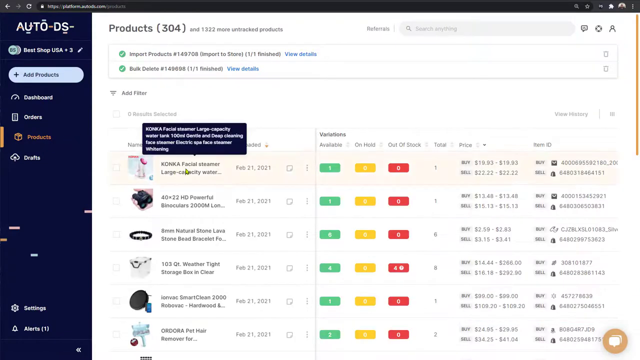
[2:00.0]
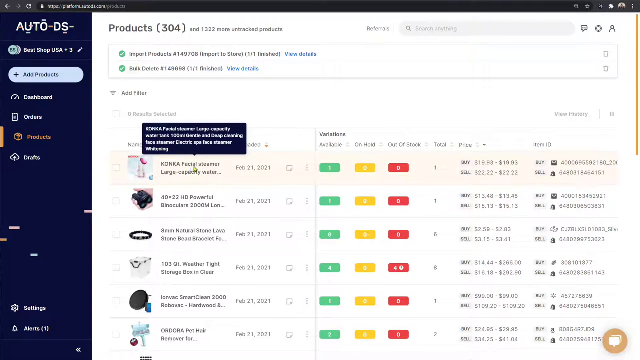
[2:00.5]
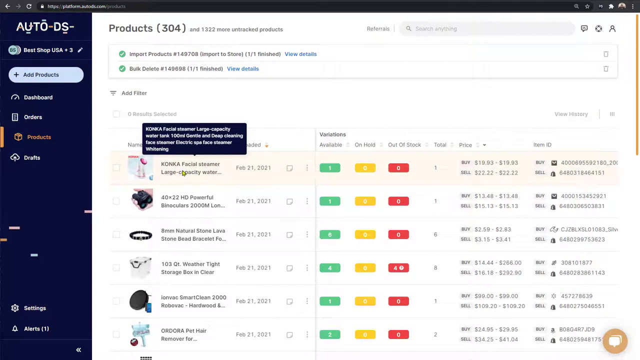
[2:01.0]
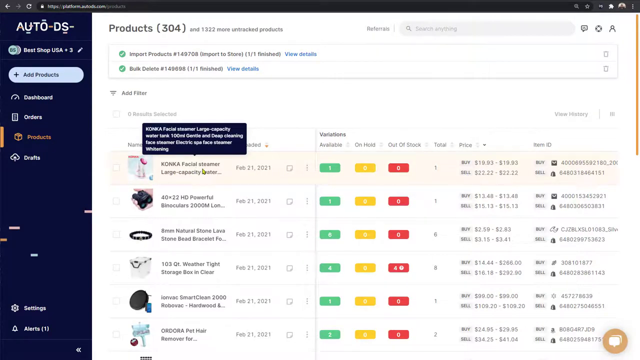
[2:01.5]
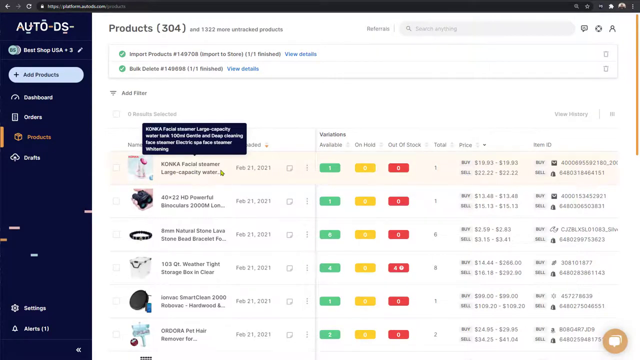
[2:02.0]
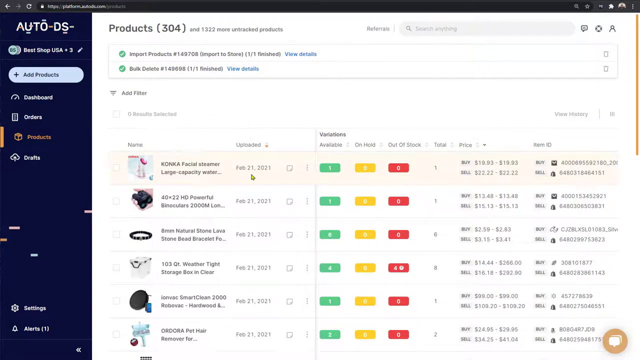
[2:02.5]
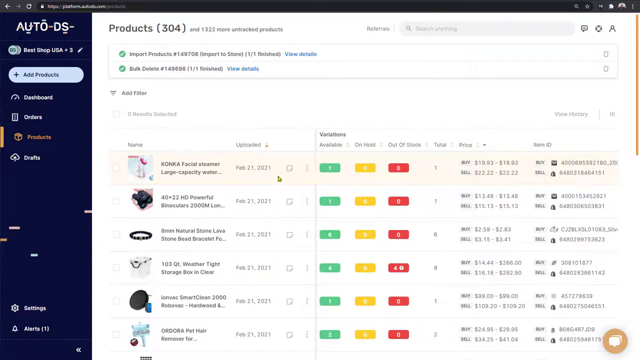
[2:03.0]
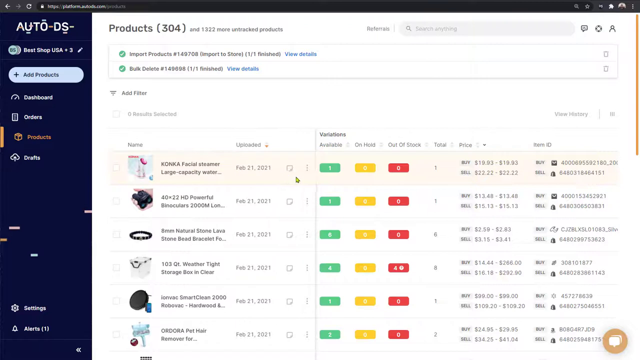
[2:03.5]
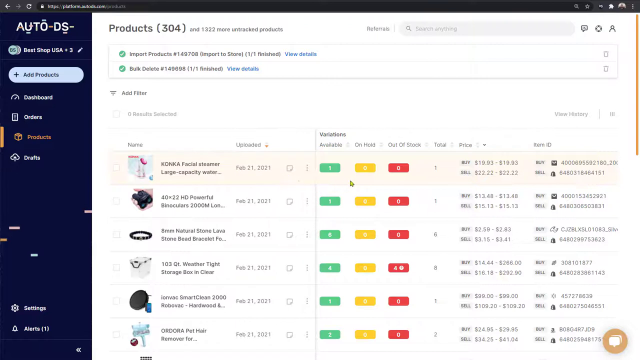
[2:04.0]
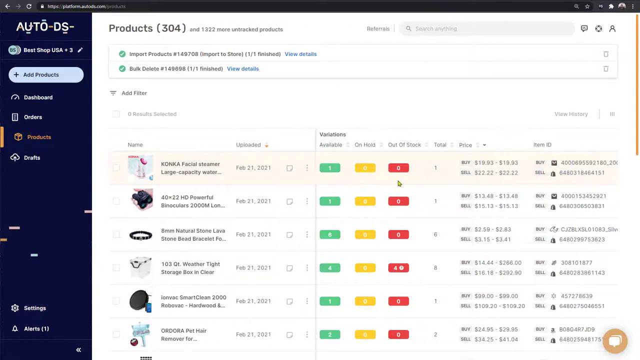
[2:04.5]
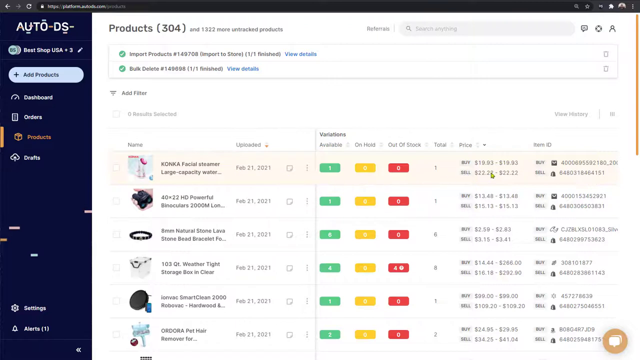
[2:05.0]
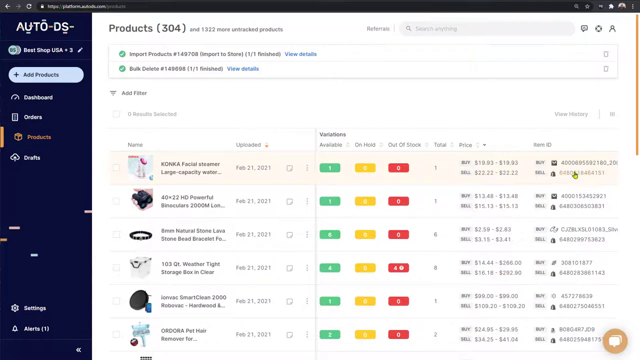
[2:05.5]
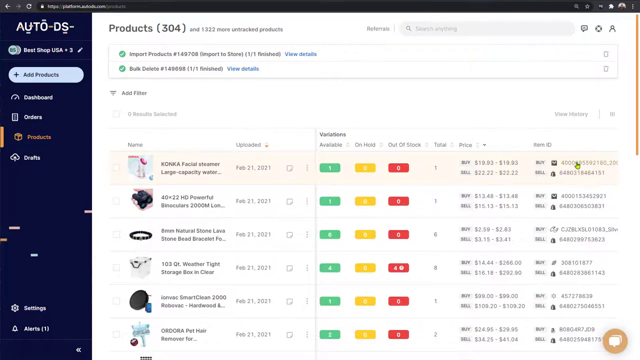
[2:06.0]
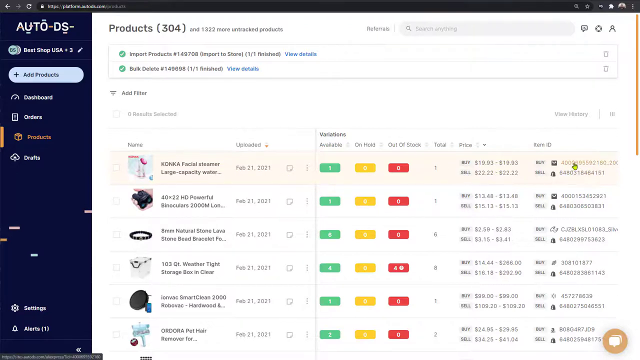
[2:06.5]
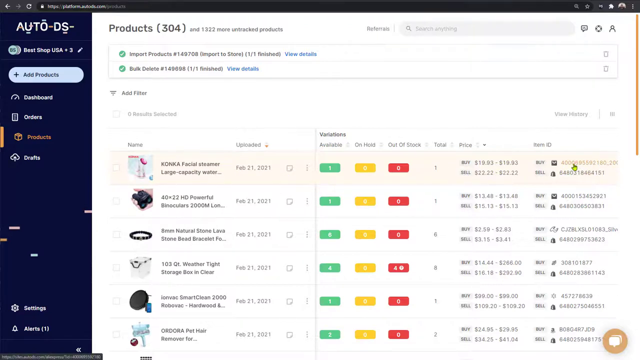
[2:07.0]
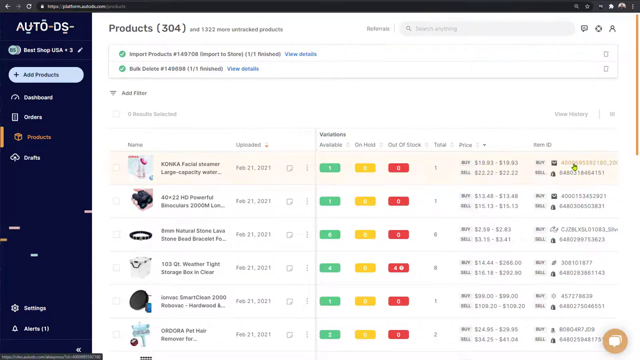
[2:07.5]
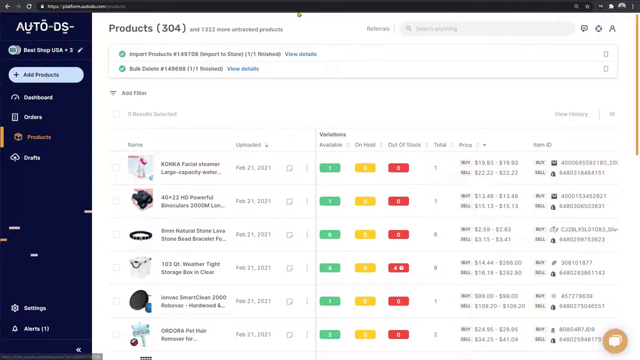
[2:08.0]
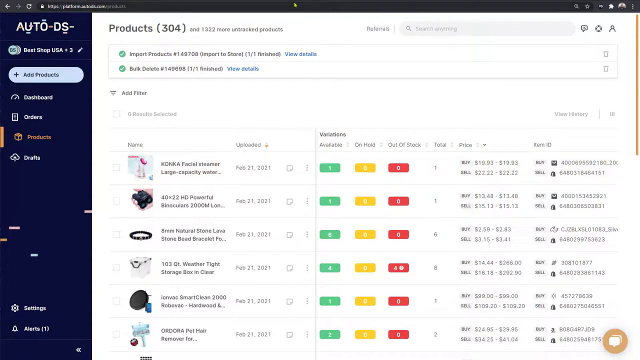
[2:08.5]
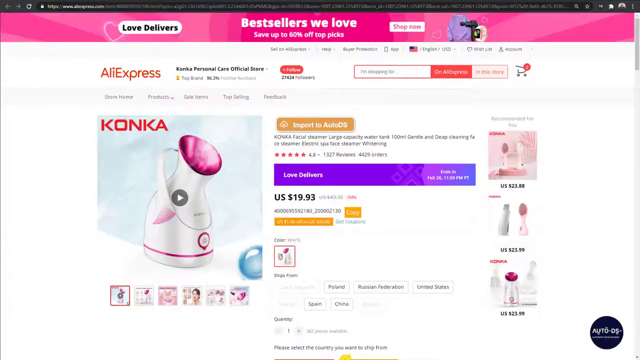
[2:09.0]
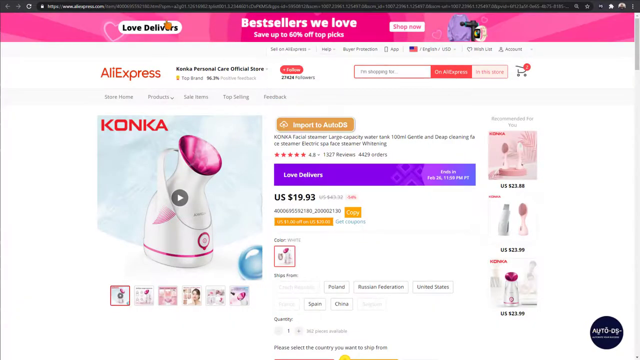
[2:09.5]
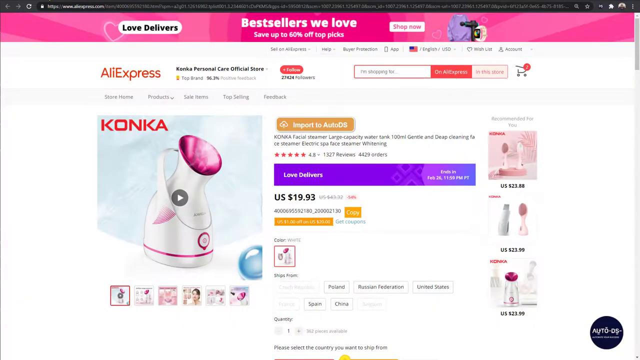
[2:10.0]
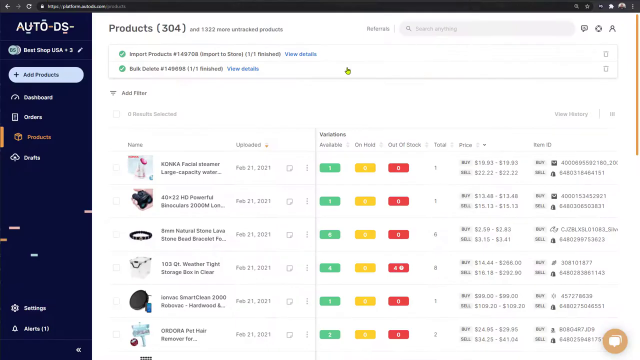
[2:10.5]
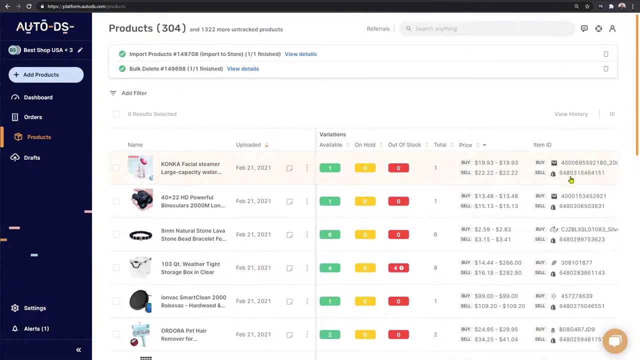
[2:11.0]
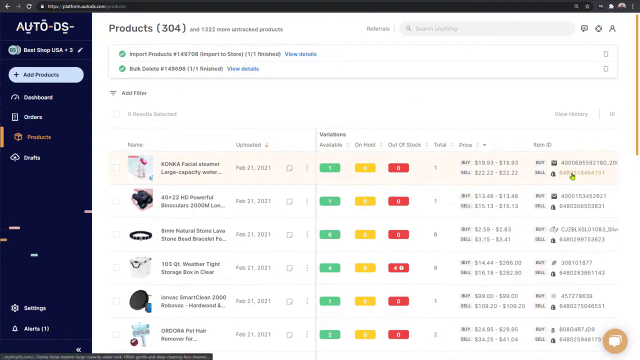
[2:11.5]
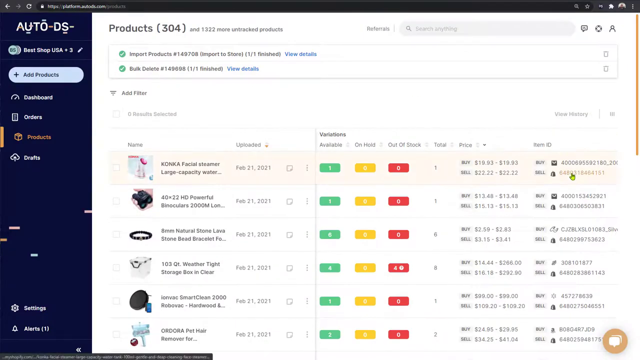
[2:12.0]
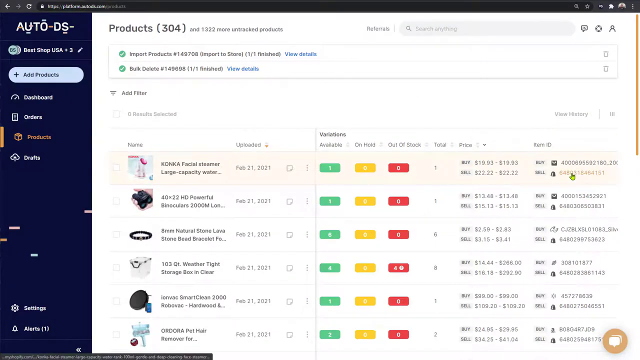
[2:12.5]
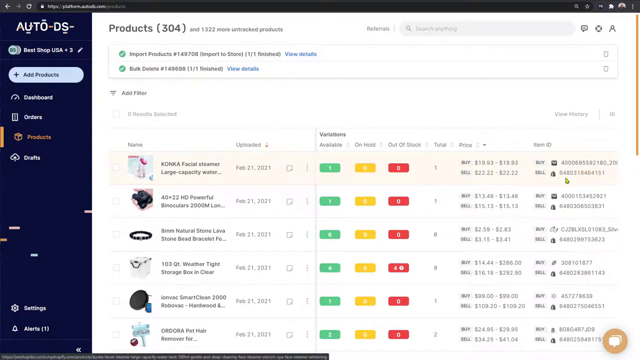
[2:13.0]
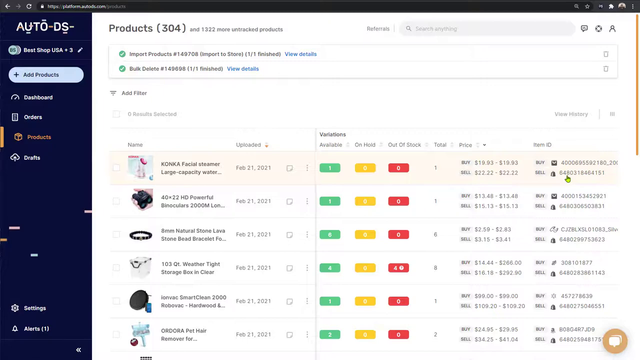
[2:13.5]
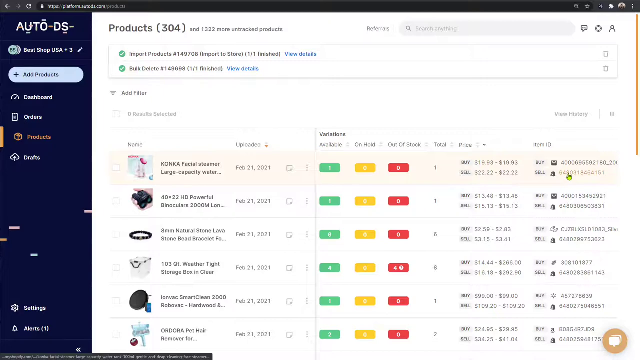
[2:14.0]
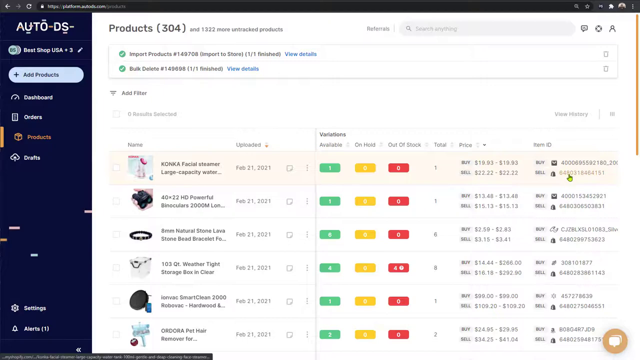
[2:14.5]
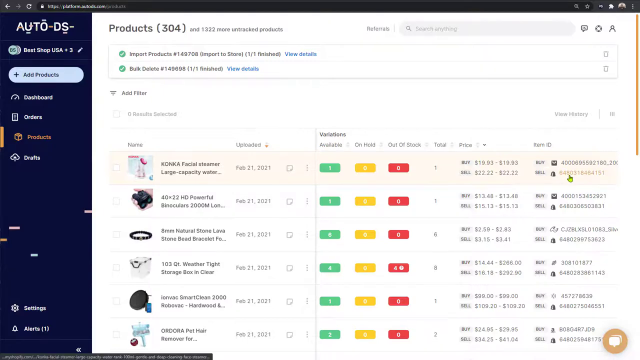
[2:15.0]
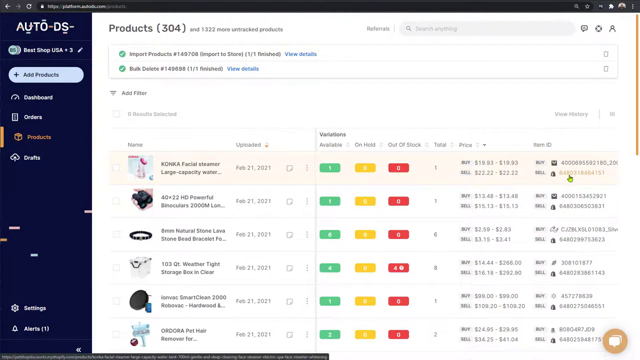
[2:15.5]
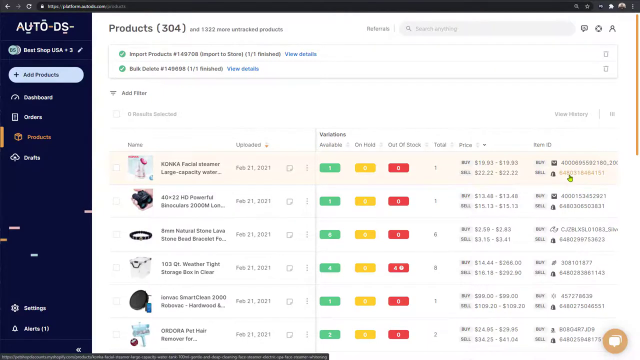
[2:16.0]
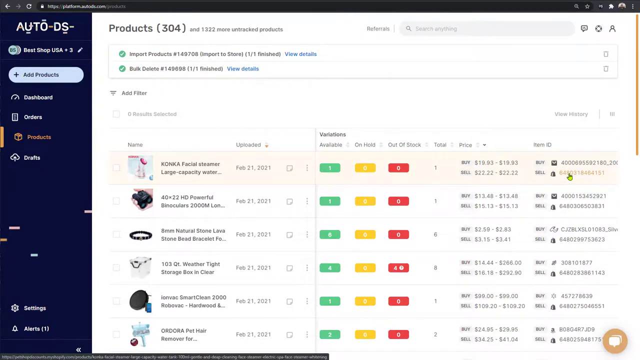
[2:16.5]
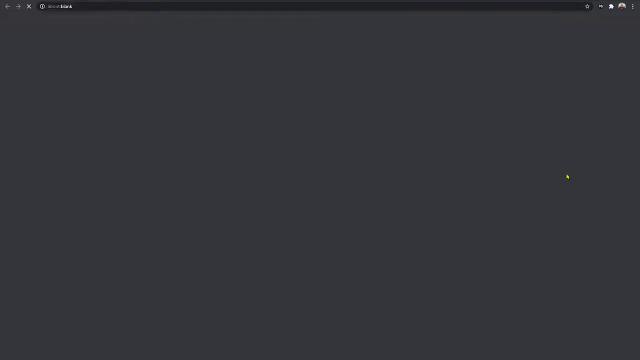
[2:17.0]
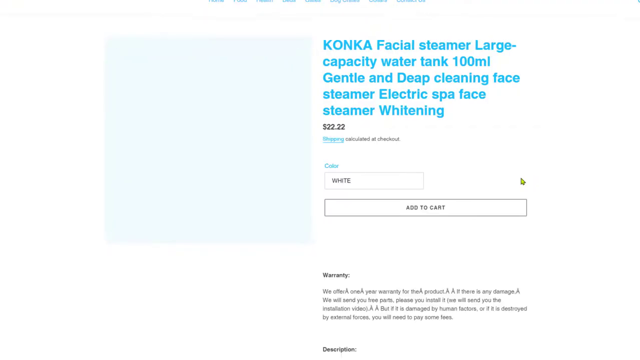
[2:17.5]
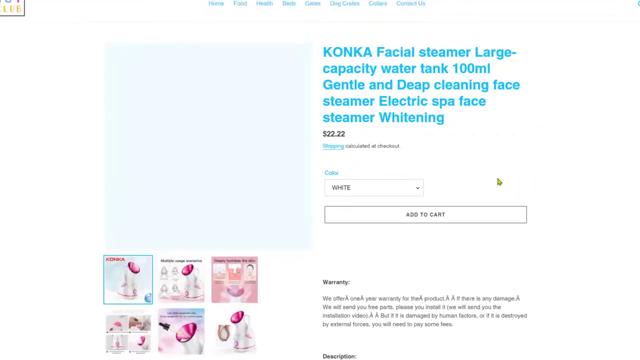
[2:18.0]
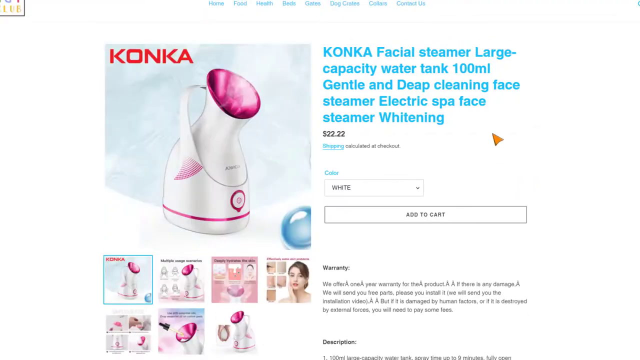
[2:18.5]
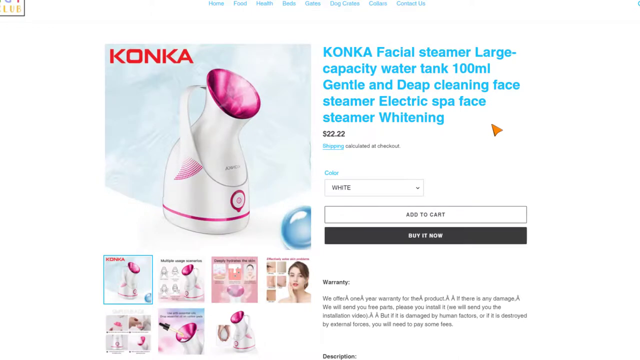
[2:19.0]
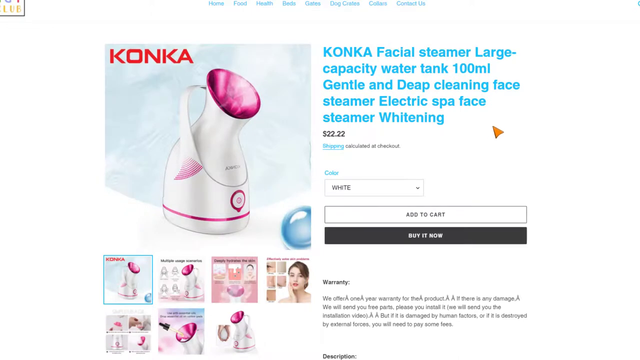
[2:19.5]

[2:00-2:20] The person is still editing their store using AliExpress, apparently as a drop shipper. They hover over the facial steamer, and text shows an upload date of February 21st, 2021, with "available 1, on hand 0, out of stock 0." They briefly go back to the image of the product, then return to their store, where text reads "buy, sell." They click on that link, which shows the product information: "KONKA facial steamer large-capacity water tank 100 ml gentle and deep cleaner face steamer electric spa face steamer whitening."